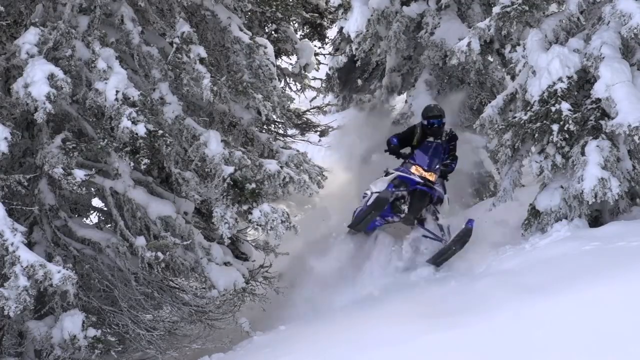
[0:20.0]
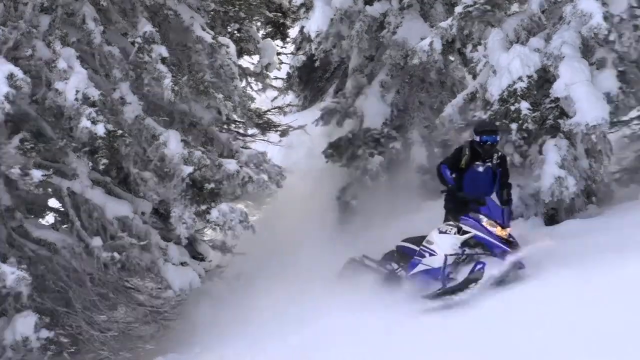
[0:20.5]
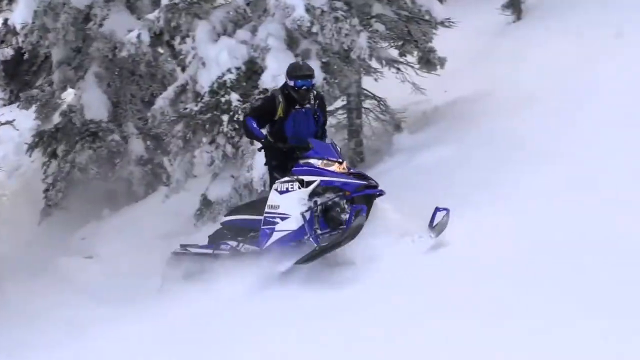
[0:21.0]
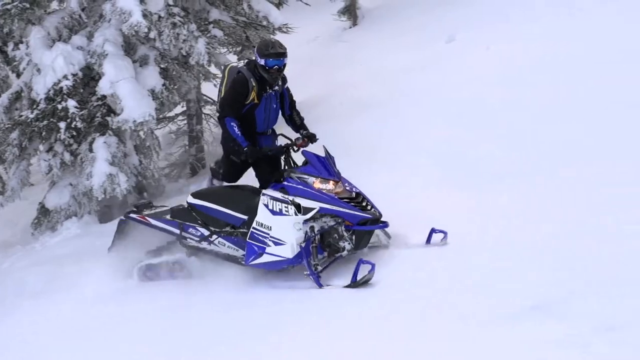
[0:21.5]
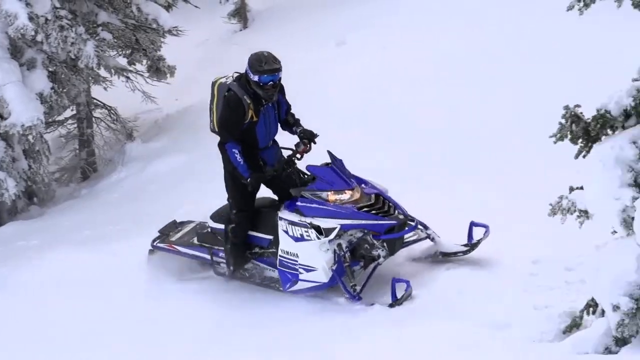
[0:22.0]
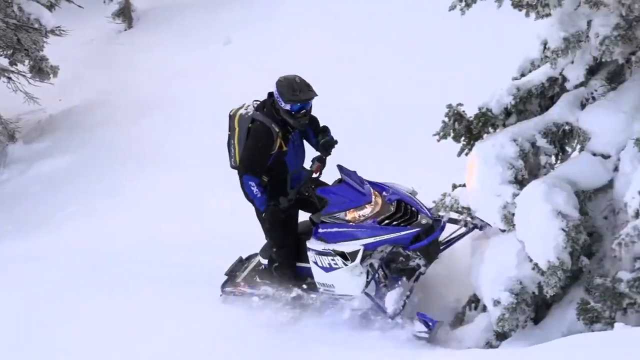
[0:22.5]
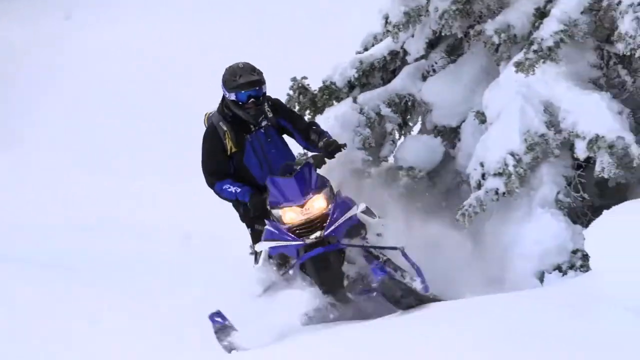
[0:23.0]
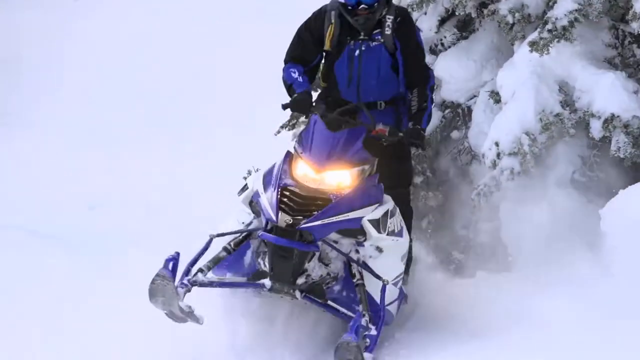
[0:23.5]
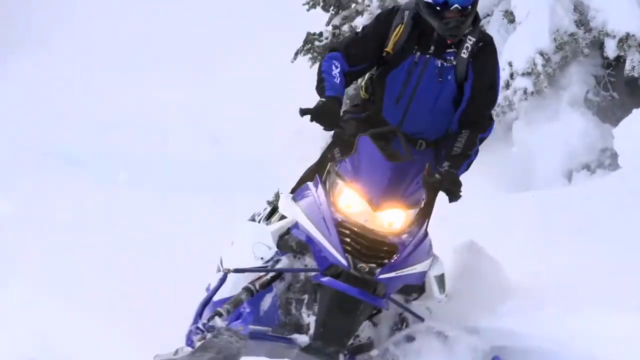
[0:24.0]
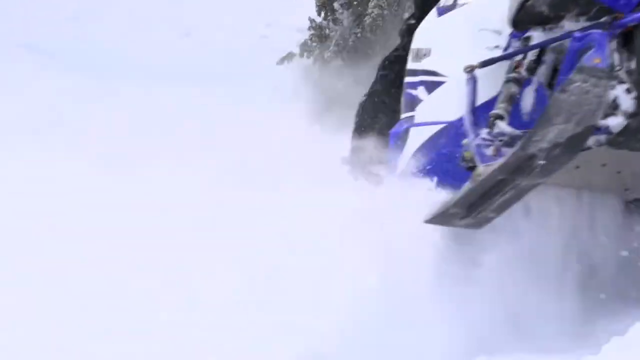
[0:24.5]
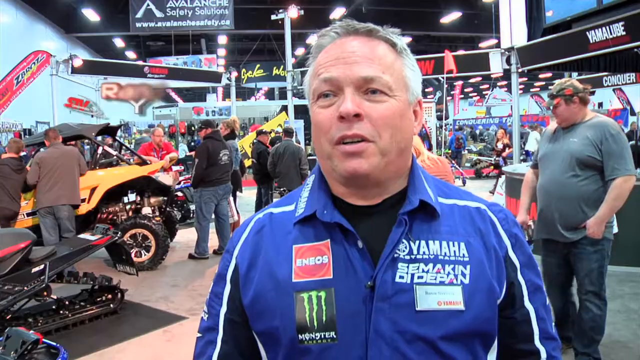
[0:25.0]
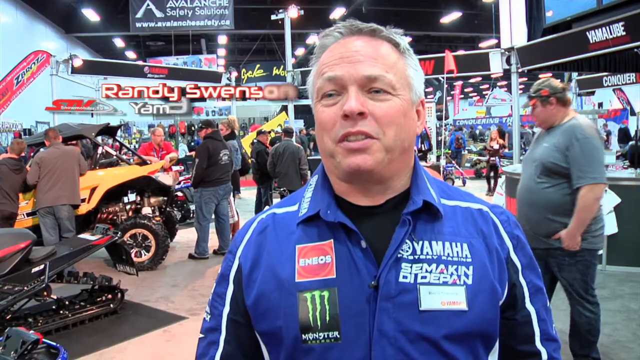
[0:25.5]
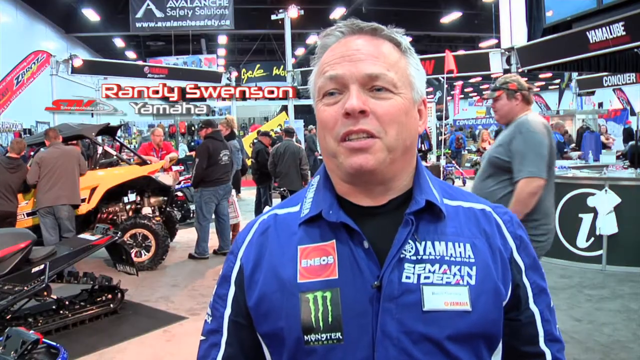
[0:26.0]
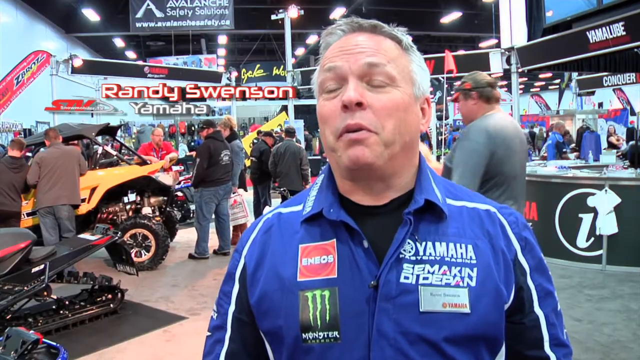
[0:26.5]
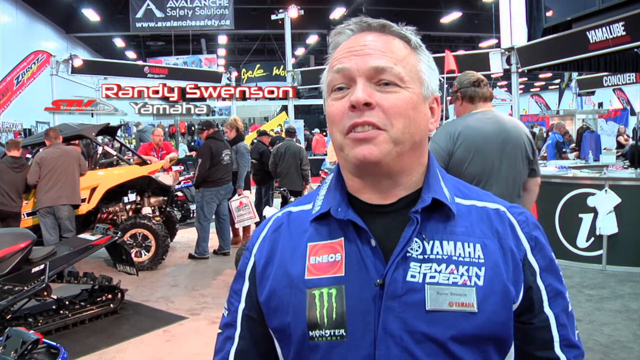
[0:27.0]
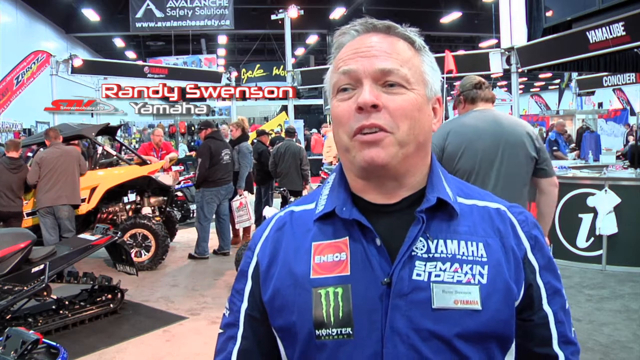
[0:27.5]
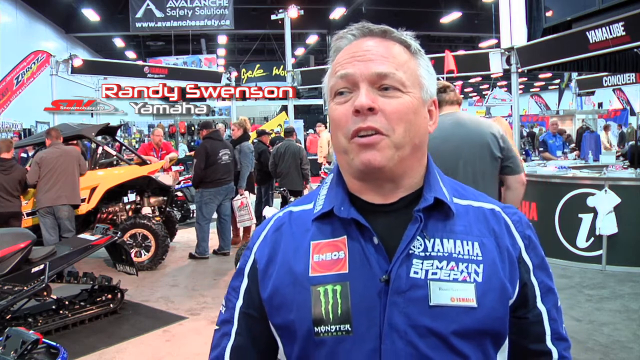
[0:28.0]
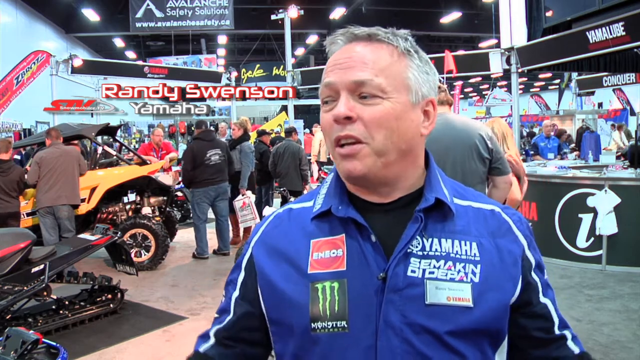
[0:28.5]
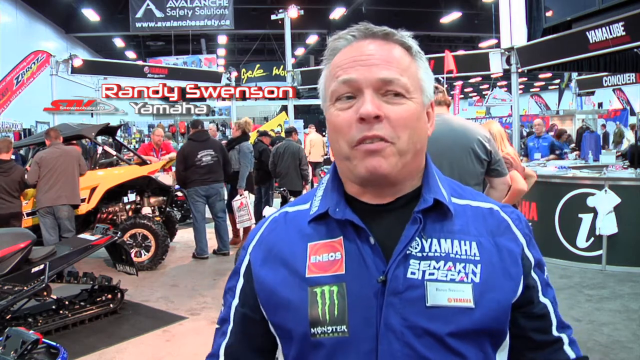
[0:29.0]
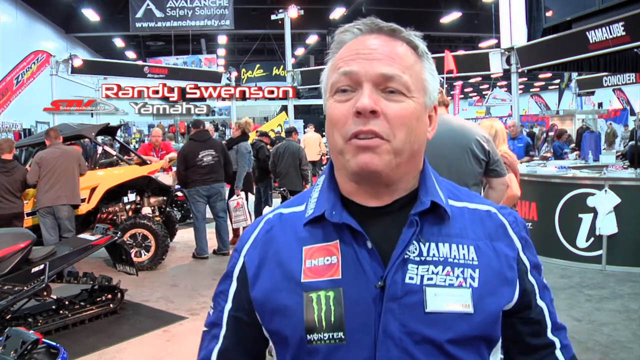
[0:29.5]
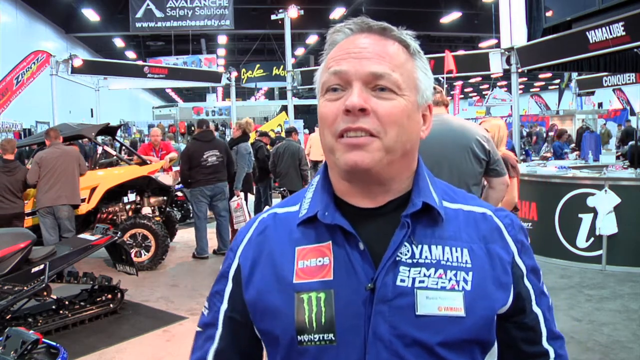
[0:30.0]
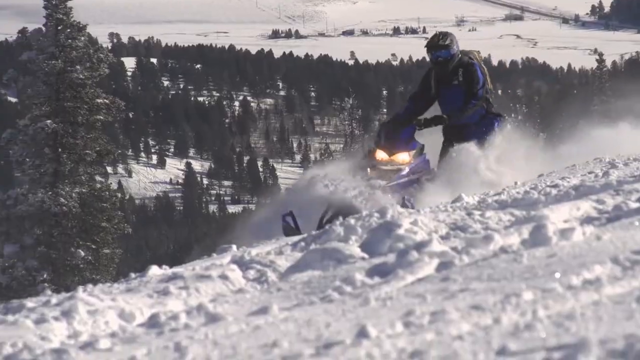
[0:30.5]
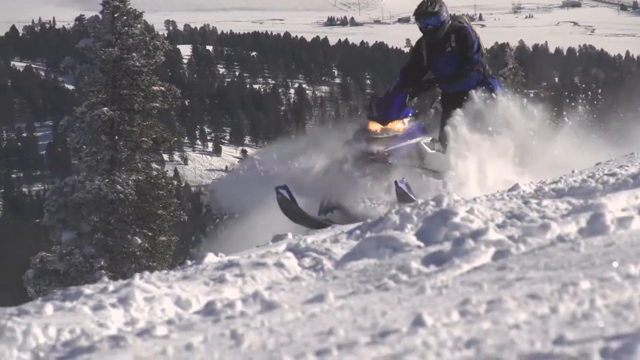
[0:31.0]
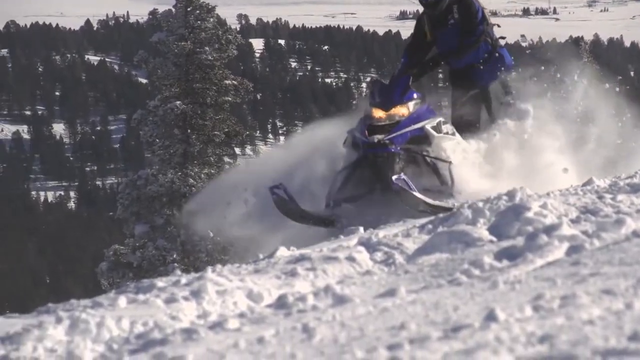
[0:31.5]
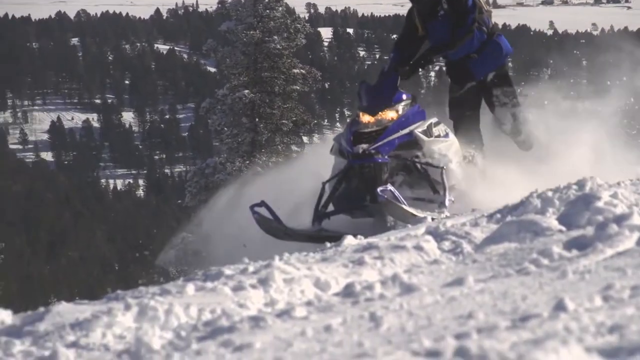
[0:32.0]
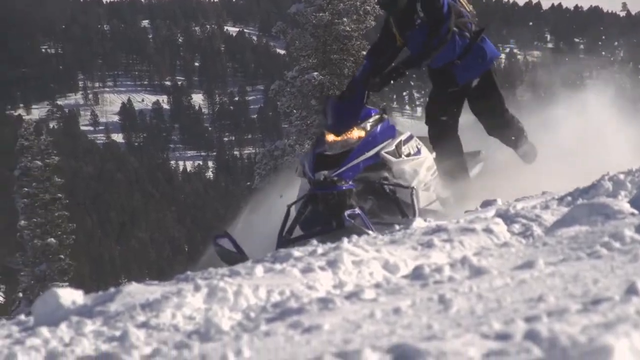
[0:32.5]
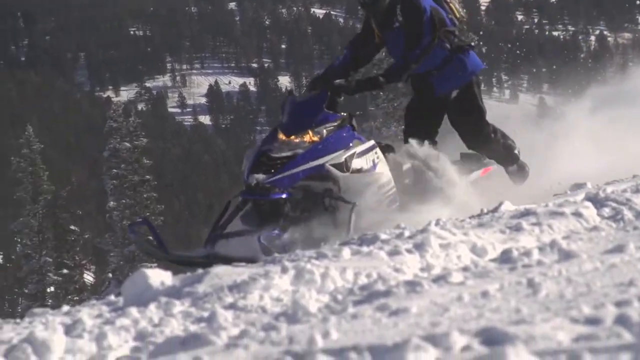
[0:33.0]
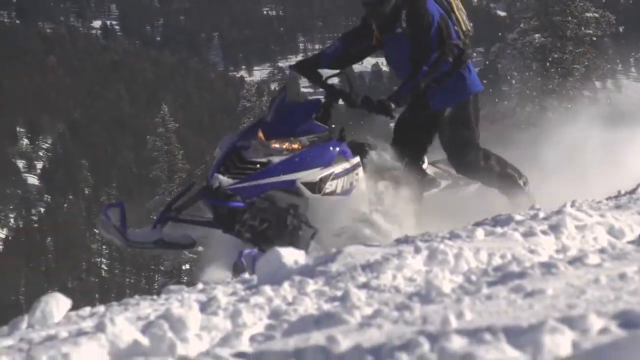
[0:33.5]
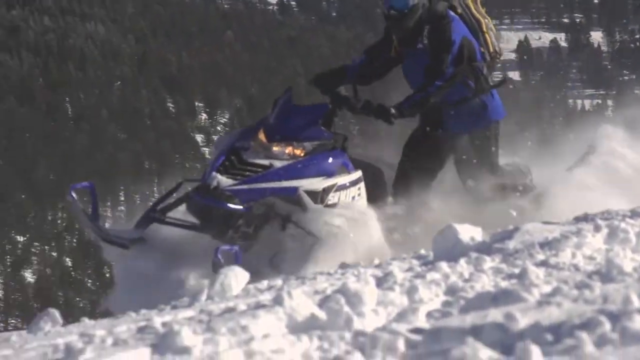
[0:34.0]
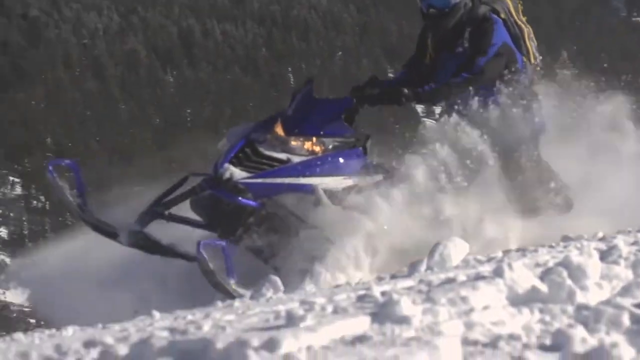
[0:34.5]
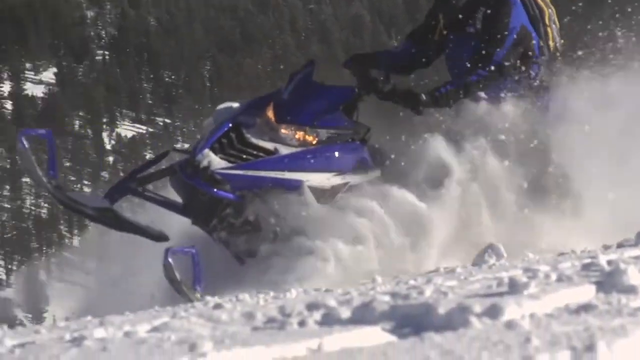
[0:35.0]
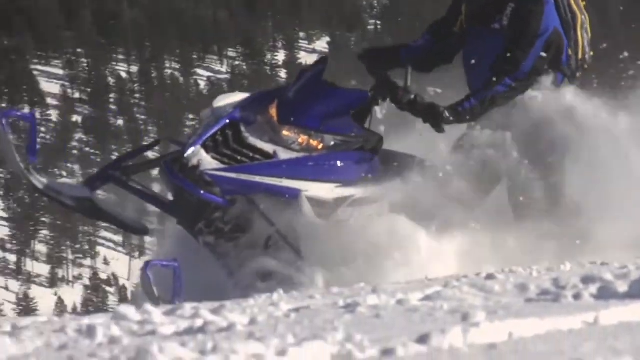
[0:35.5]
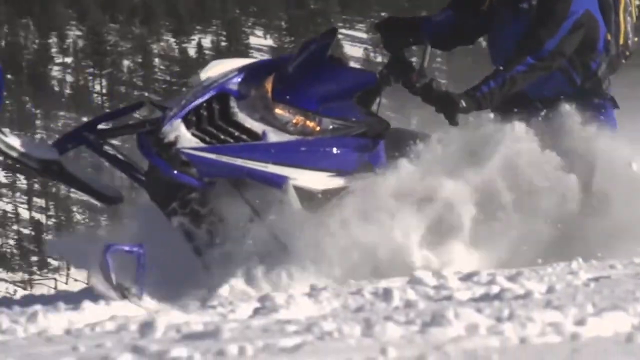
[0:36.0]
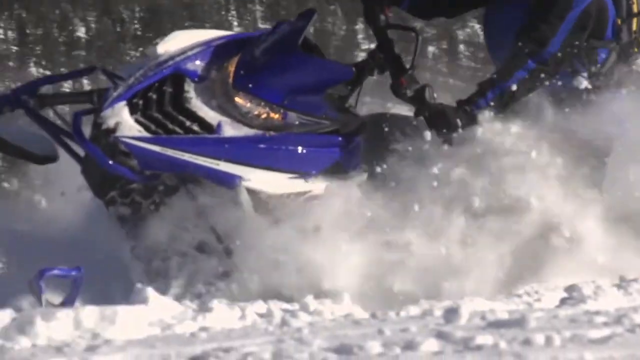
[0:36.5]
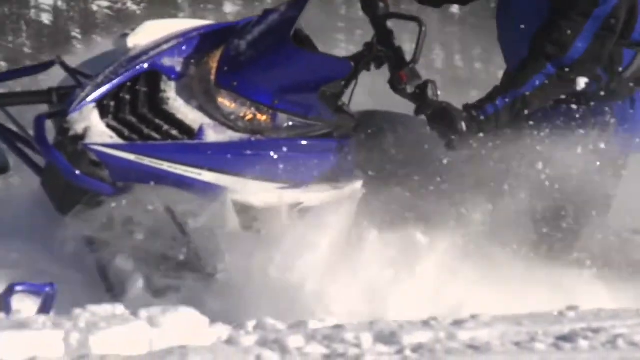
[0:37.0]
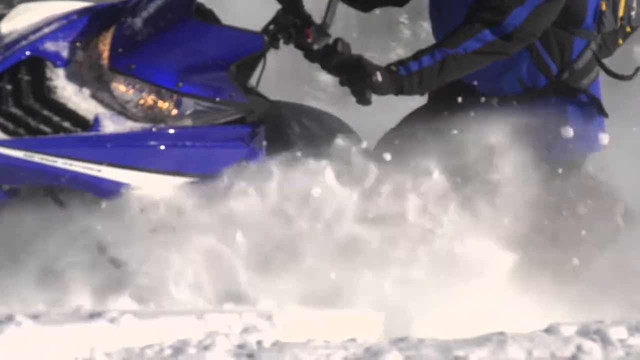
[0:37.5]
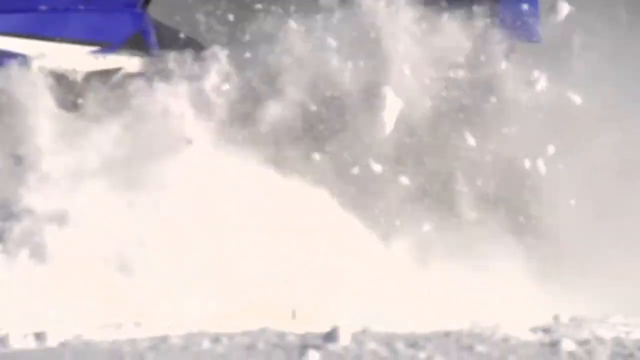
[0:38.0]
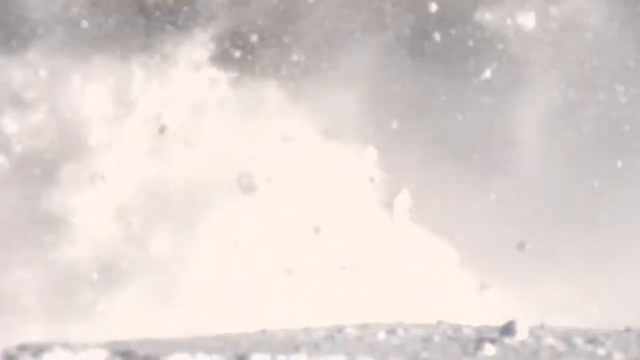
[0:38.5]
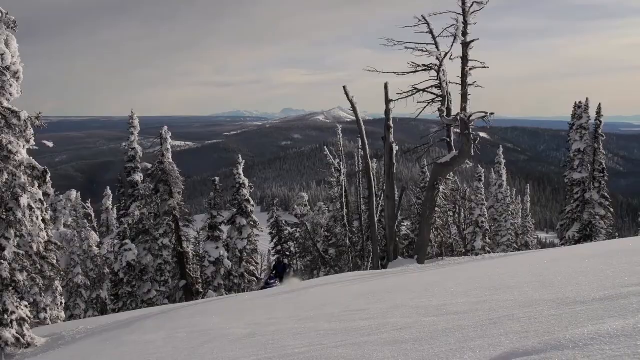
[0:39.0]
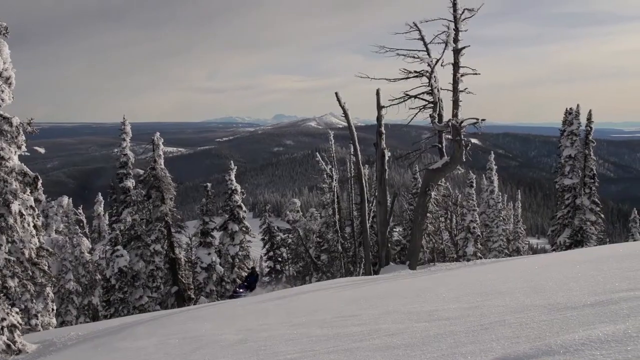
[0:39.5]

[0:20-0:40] A blue and white snowmobile goes down a snow-covered hill. The rider appears to wear a black top and a black helmet with goggles or shades. A few snow-covered evergreen trees are around him. He goes through the snow, turning left, then right as he heads down the hill. The scene then changes to the inside of a large building with many, many lights all across the top; it looks like it may be some kind of convention. A man in the foreground nearest the camera wears a blue jacket with white trim and a monster logo on the right chest. He appears to be in his mid-50s to early 60s and has gray hair. He is talking to somebody off camera. To the right of his face, white text reads "Randy Swenson," with "Yamaha" in white text below it. In the background, many other people stand by machines, looking at them and talking.